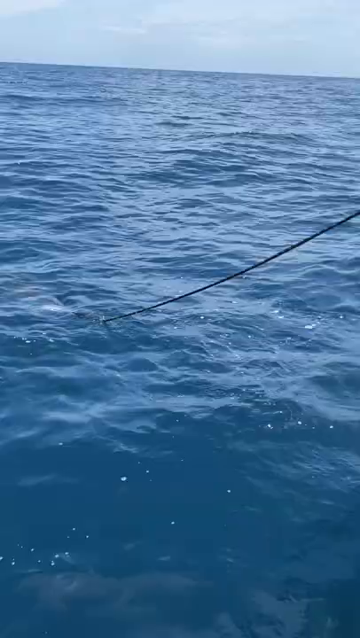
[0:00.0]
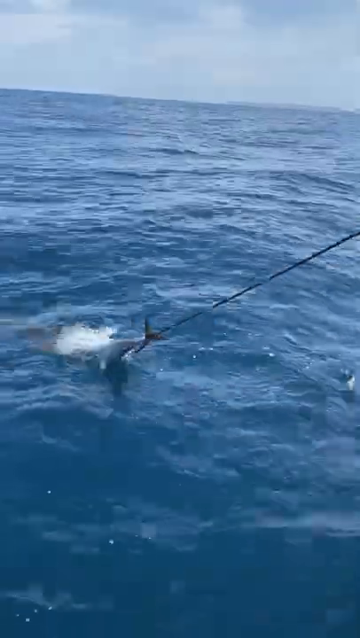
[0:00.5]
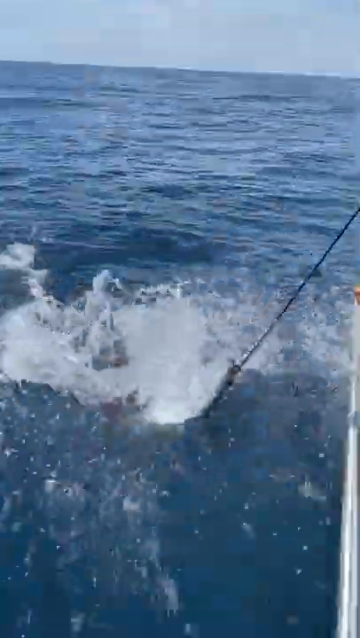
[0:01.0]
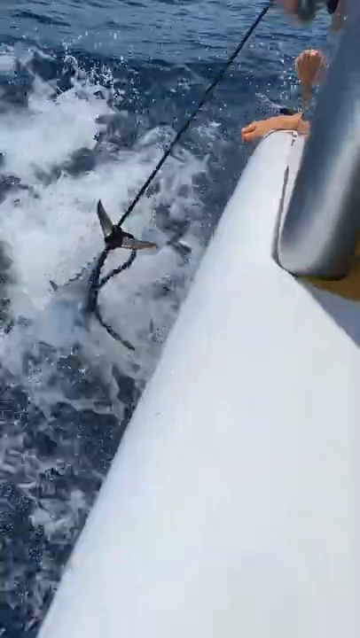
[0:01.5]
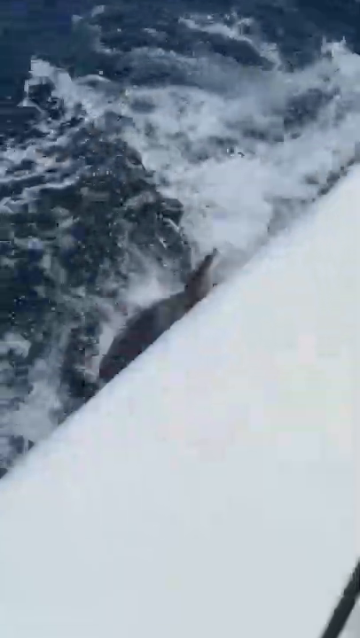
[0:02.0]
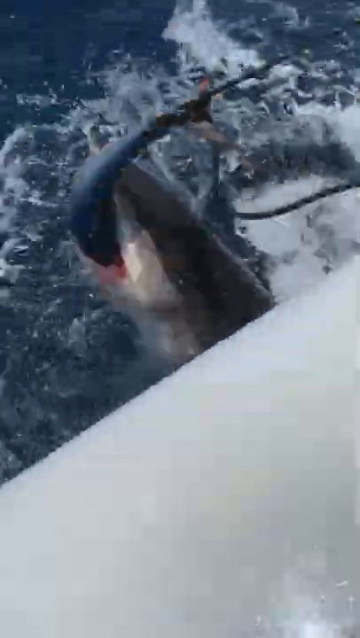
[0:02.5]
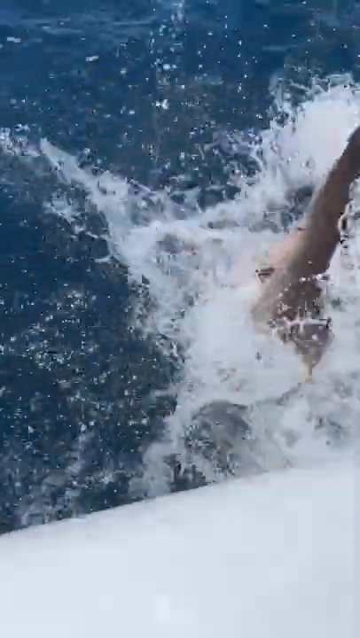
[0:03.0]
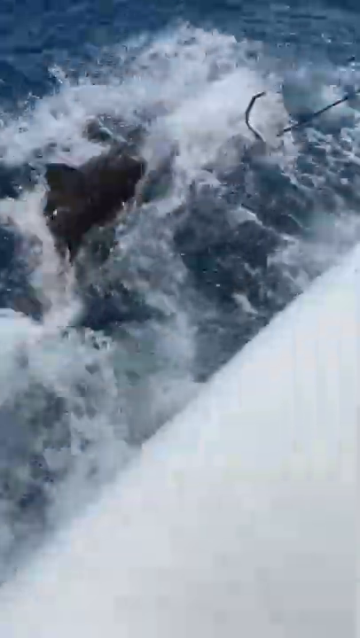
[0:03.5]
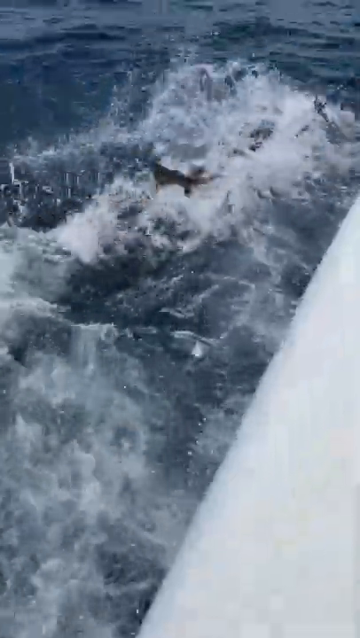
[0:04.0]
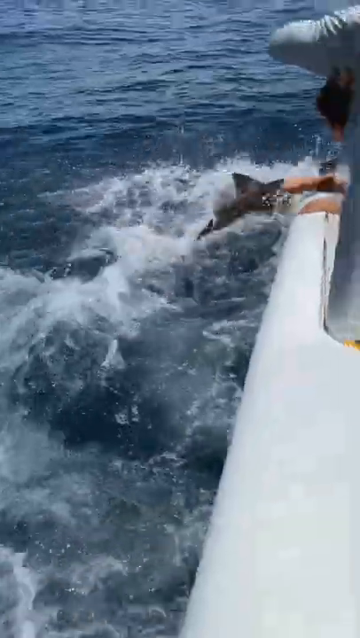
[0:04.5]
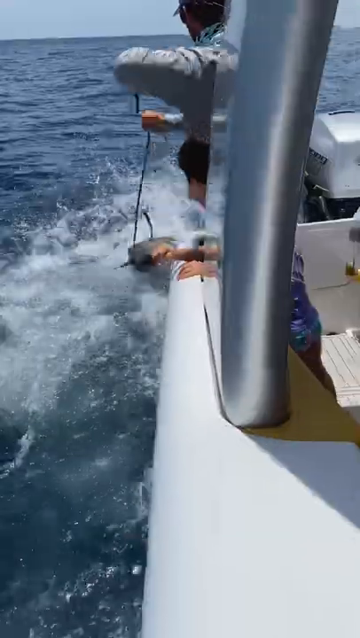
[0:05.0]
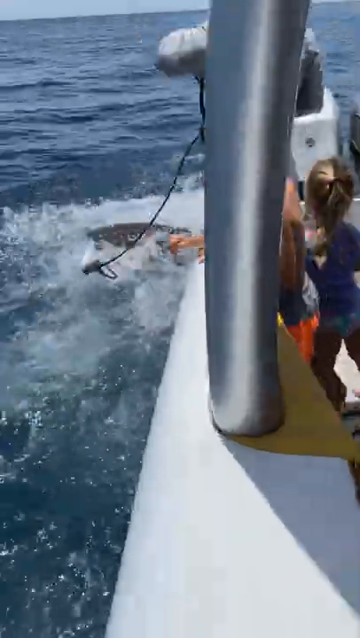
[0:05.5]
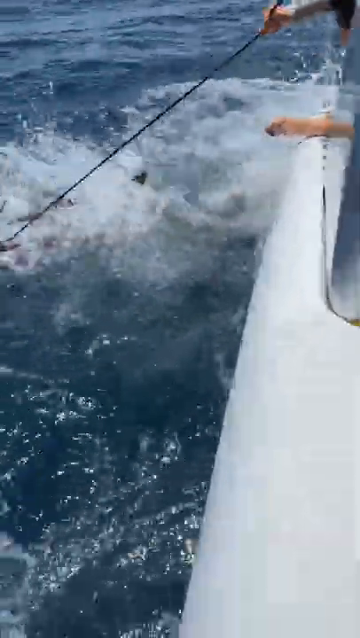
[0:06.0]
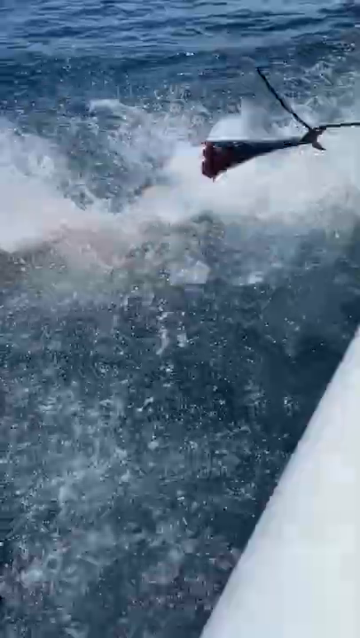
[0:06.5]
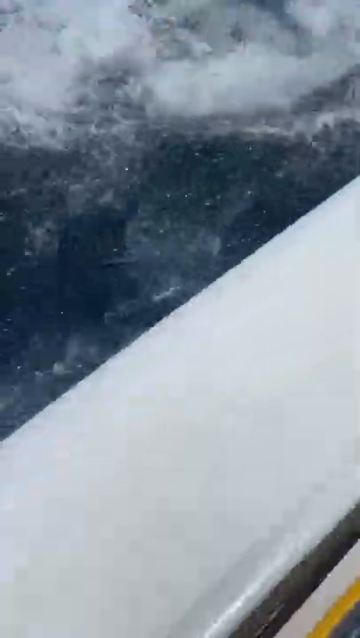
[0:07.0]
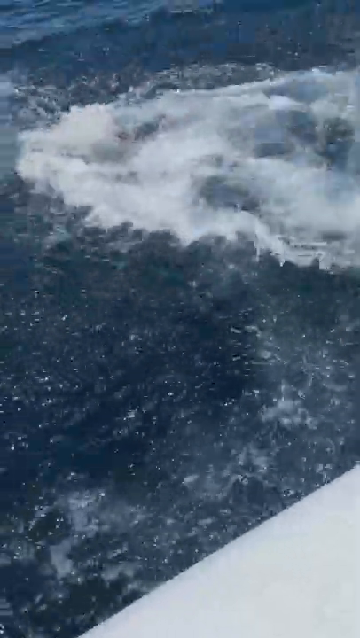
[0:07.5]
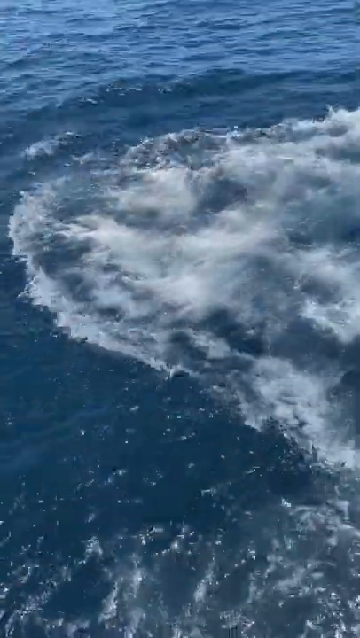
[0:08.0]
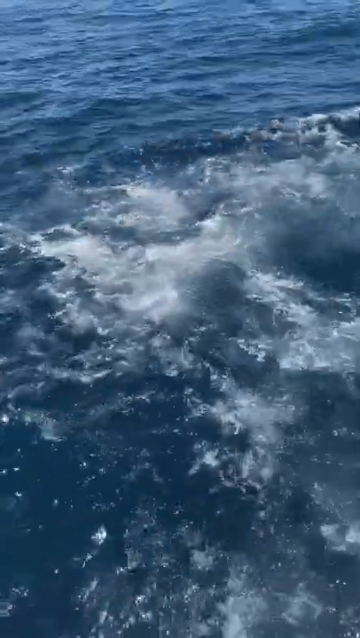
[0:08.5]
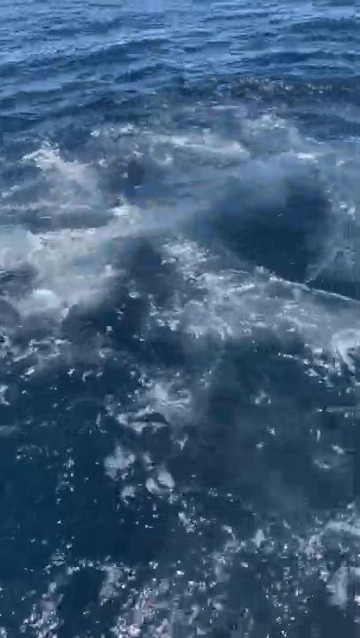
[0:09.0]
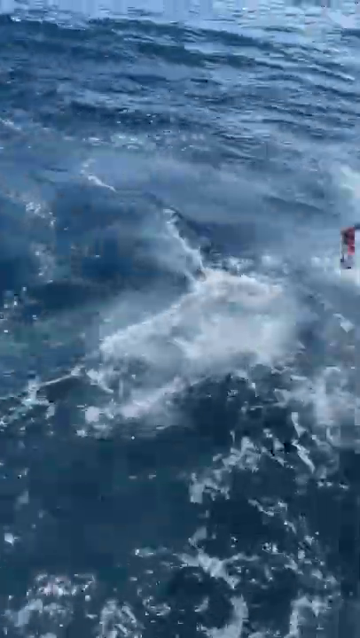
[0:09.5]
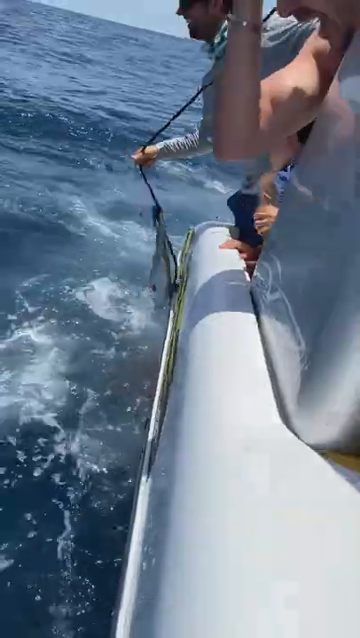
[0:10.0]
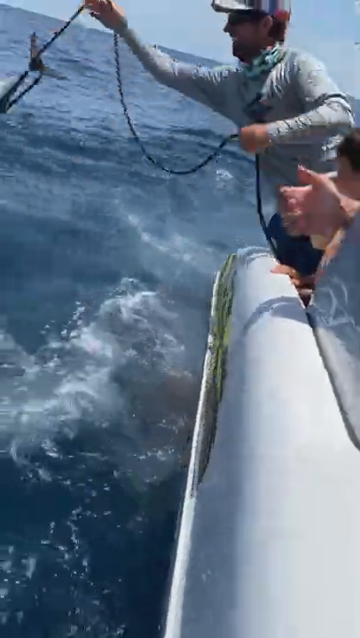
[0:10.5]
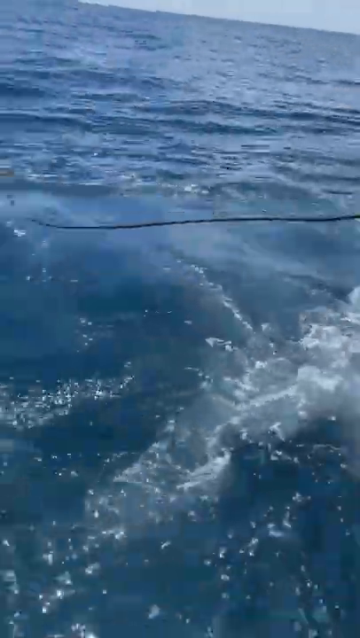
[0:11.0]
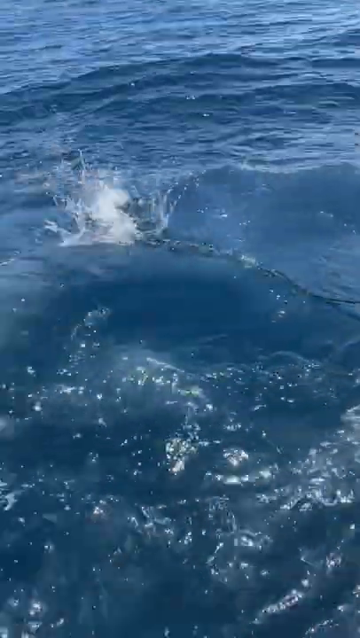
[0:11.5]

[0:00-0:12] The footage is taken from the side of a boat on a very sunny, bright day. At first only a rope is visible; it is not a fishing line but actual rope. Suddenly a shark appears, the thing that has caught hold of the rope. As the rope is pulled forward, the shark thrashes wildly, with something in its mouth that it will not let go of, while the fishermen try hard to pull the rope back from it. A man has a fish tied to the rope and tosses it out to the side of the boat, and that is what gets the shark's attention; the shark sees the food and goes after the fish.